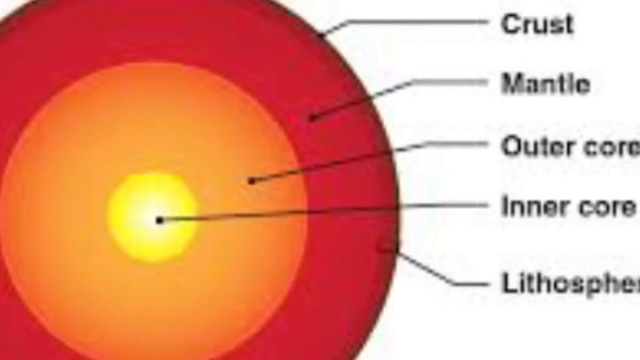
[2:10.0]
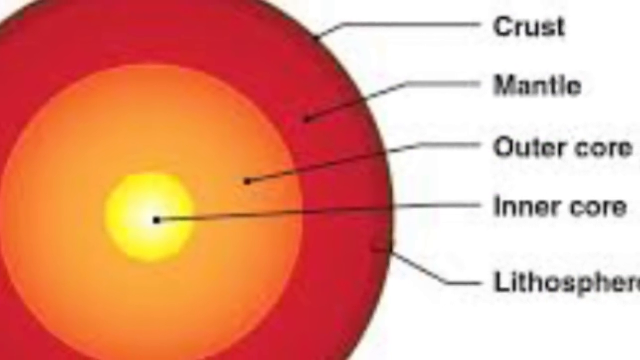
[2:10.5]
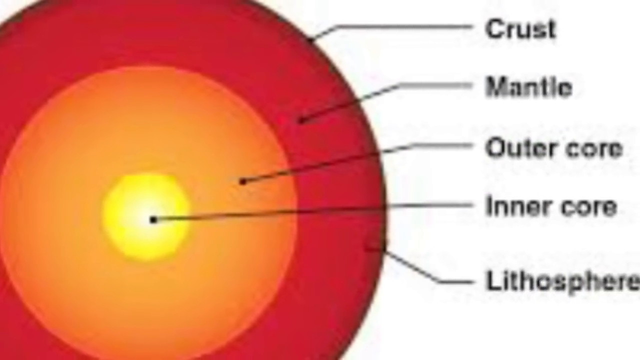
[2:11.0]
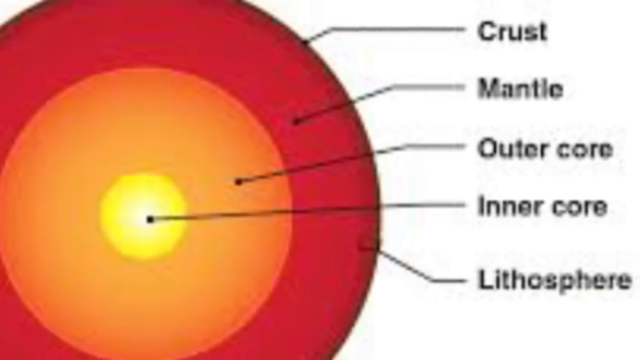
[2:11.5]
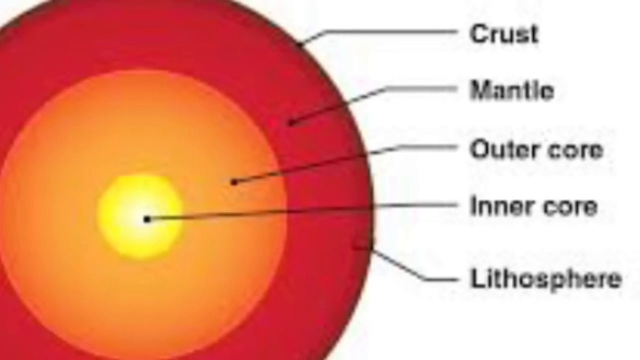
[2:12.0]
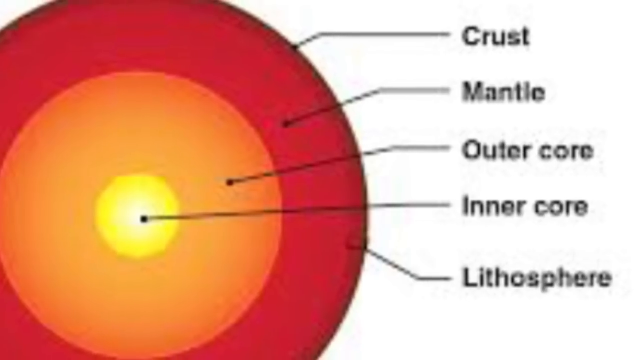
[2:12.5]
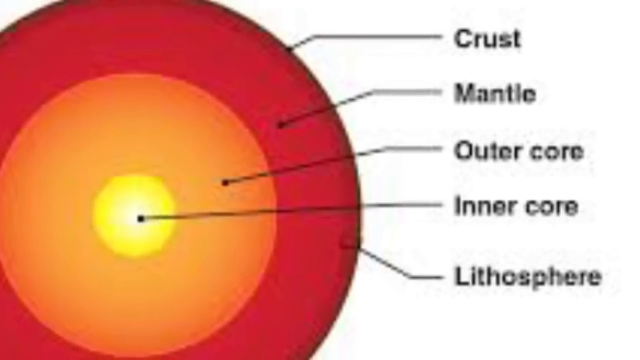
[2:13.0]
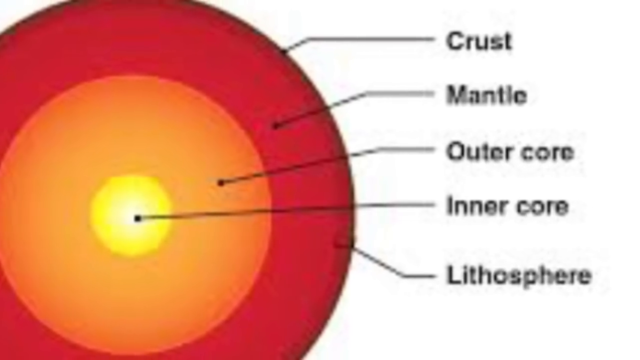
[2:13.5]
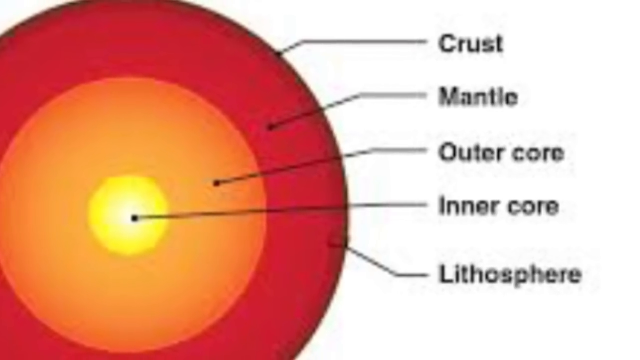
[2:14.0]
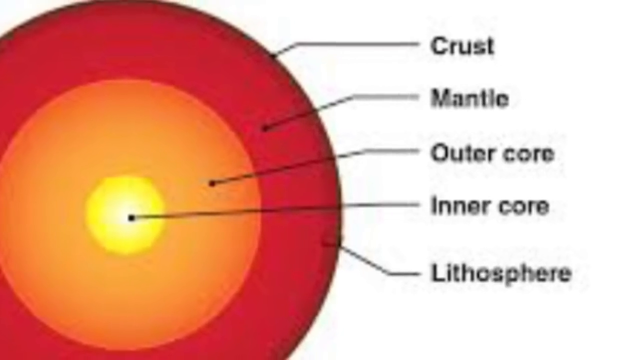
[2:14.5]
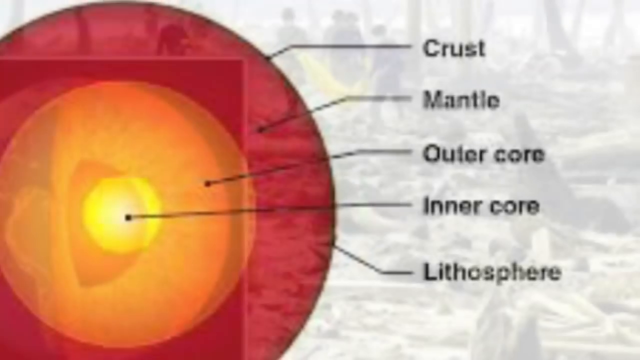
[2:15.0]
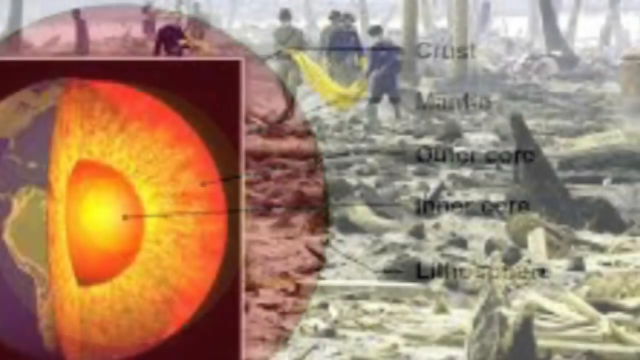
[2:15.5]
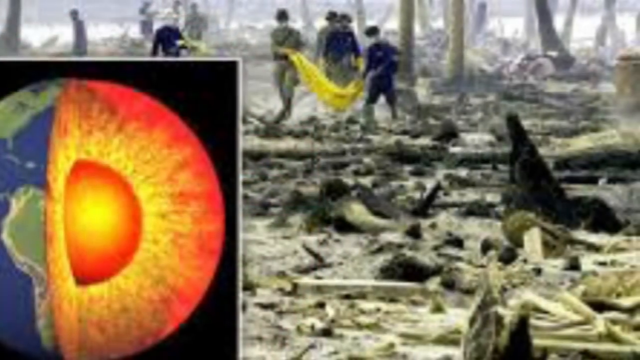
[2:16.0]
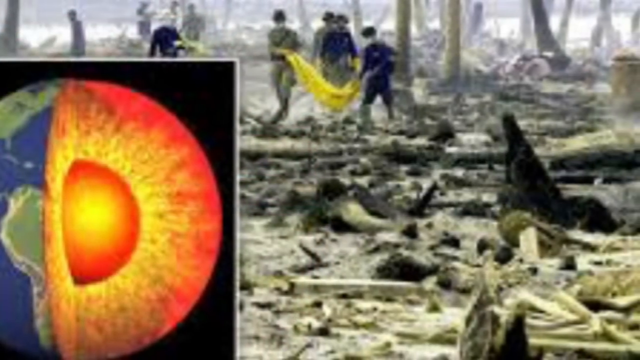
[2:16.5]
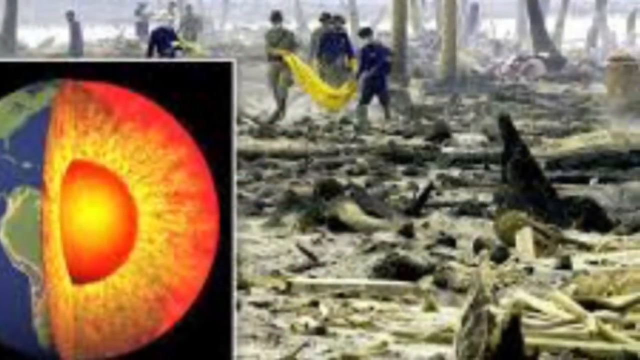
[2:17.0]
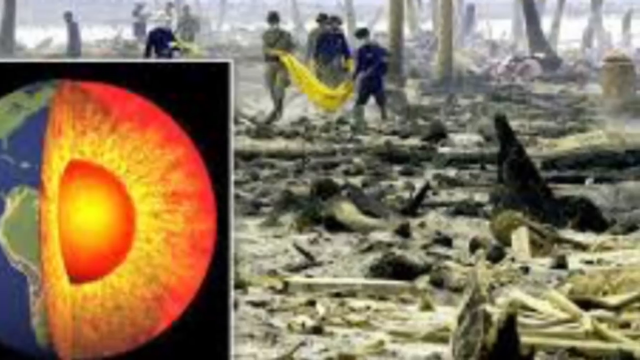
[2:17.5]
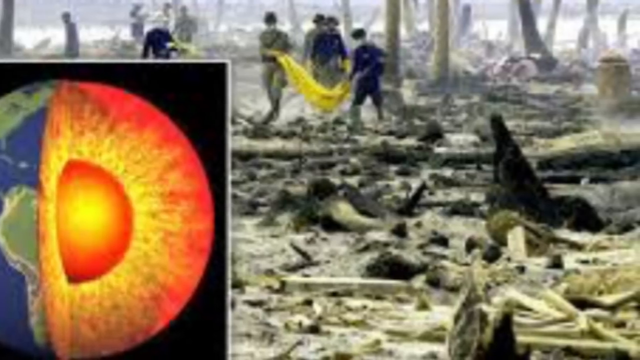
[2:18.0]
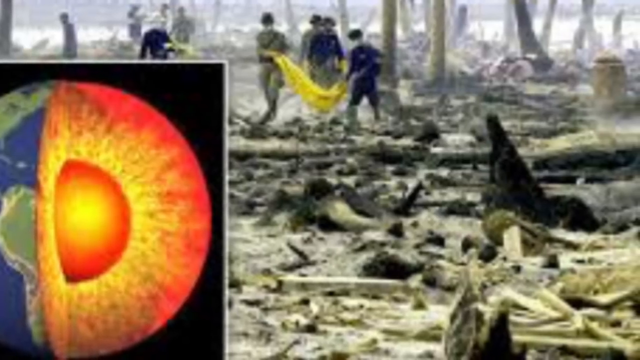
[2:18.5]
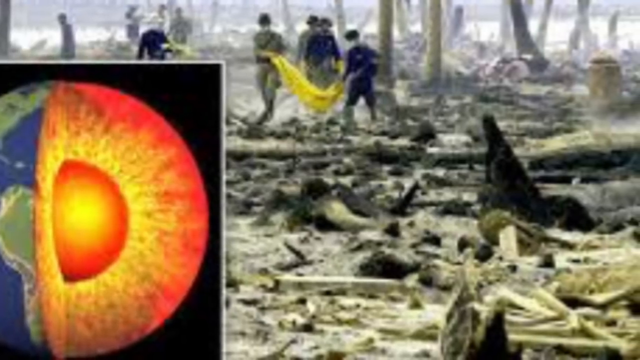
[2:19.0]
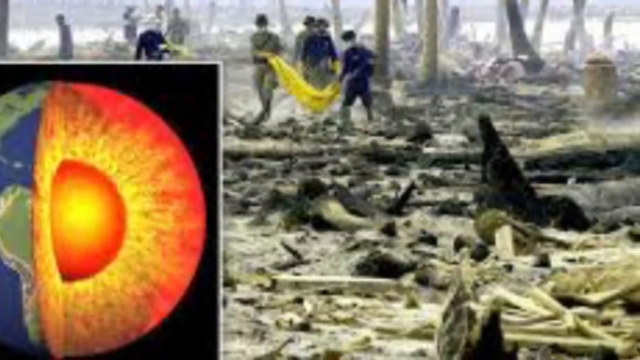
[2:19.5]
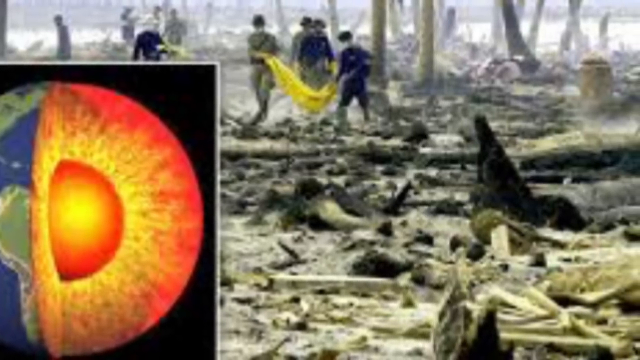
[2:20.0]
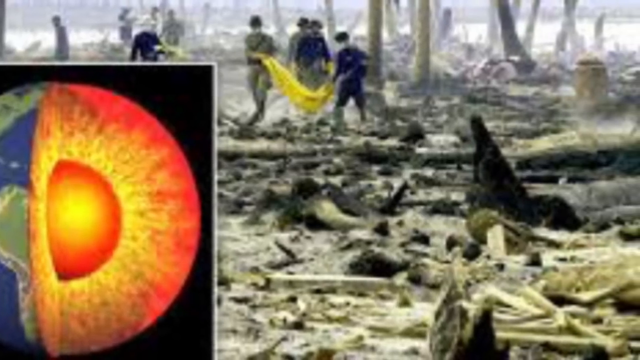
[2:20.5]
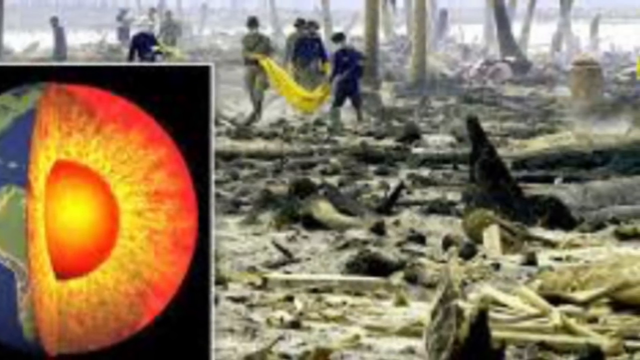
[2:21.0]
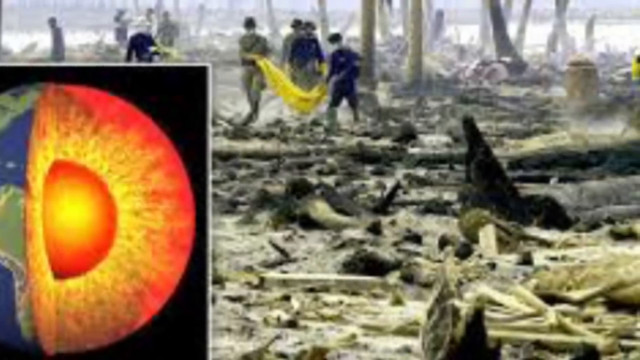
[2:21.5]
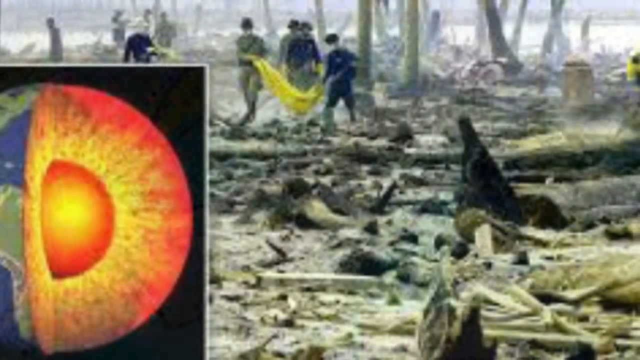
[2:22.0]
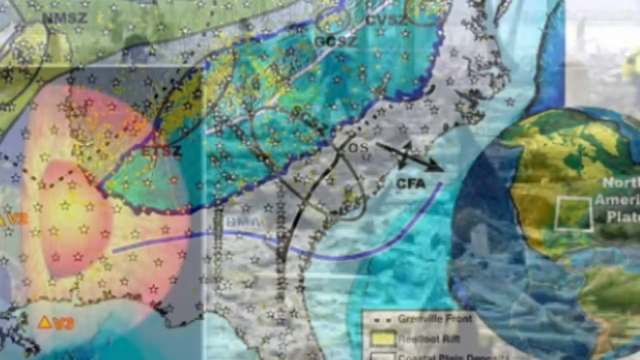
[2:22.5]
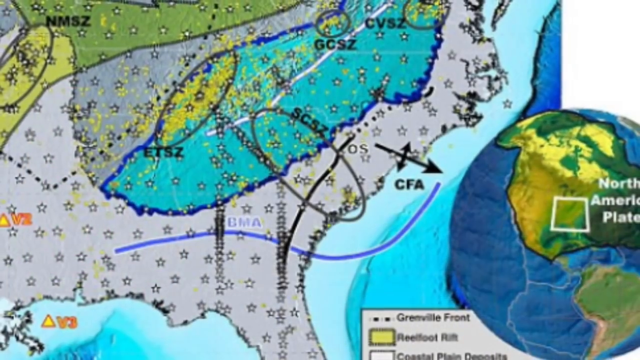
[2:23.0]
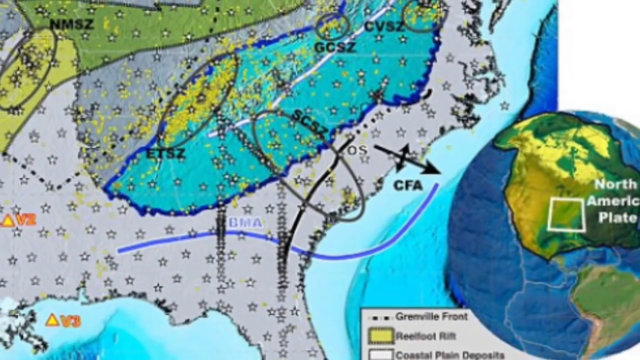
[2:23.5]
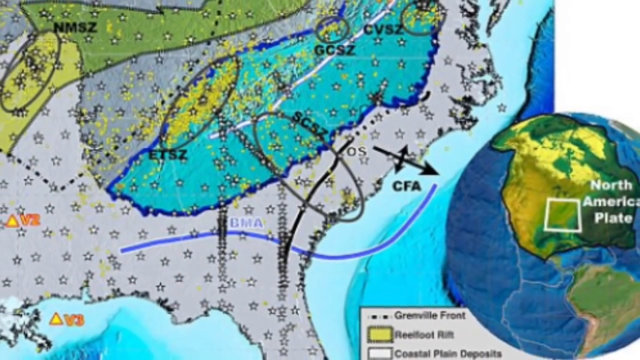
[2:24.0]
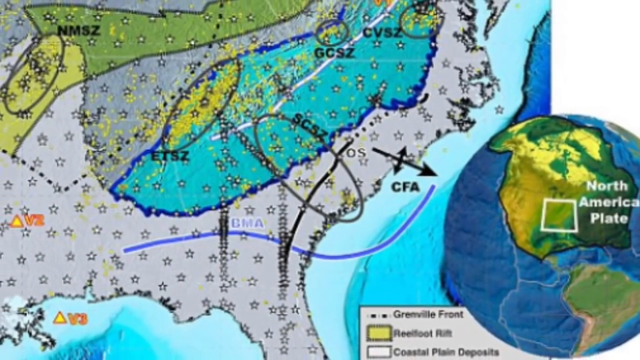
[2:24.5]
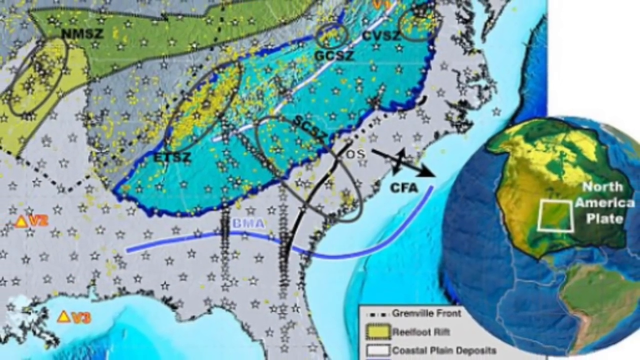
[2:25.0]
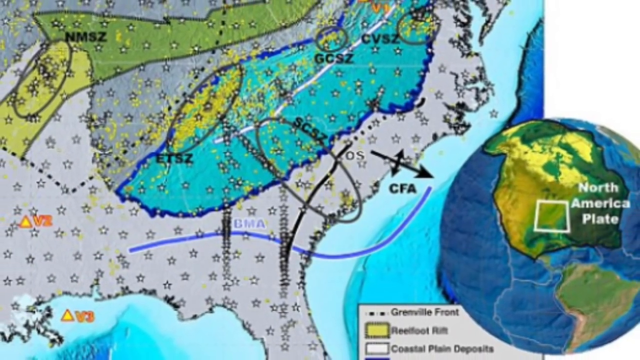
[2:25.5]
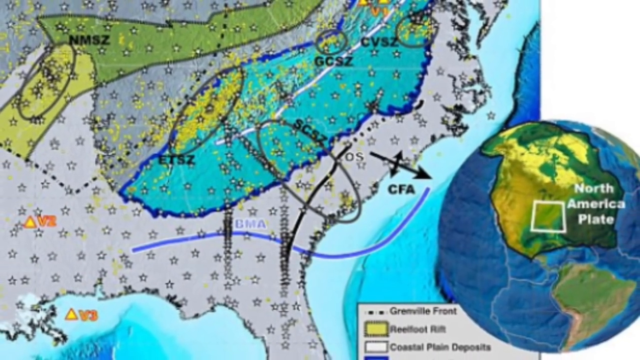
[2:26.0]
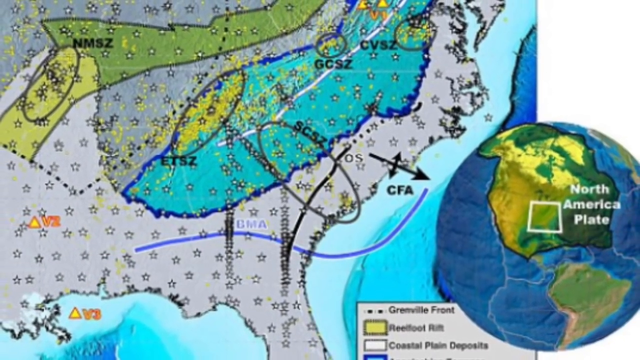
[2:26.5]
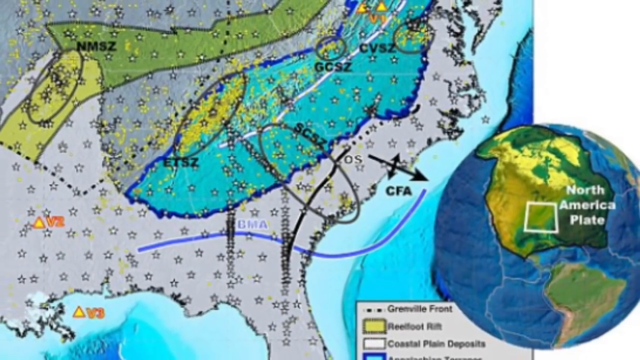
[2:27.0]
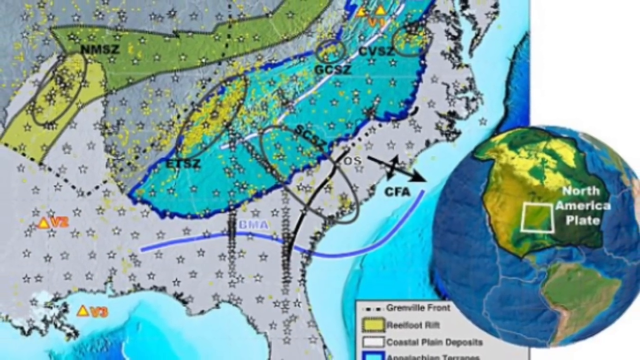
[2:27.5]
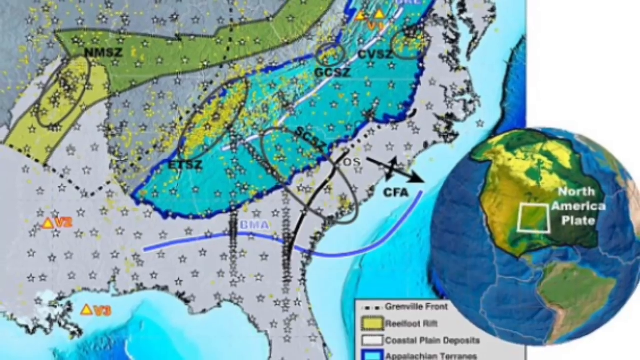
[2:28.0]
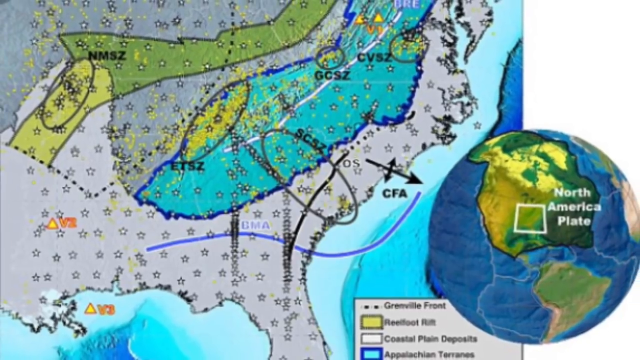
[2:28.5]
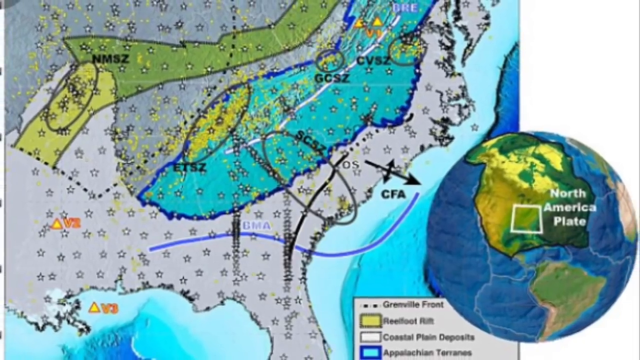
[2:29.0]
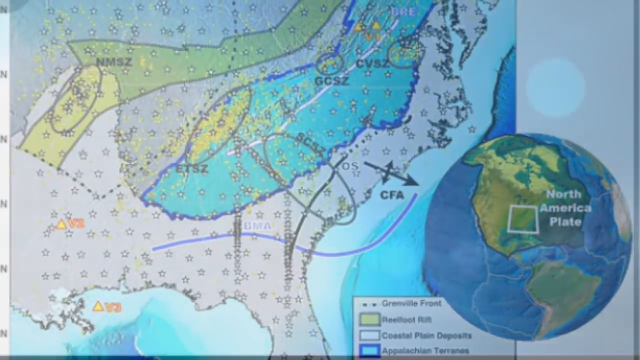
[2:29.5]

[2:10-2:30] A large circle appears with an inner circle, another inner circle and another inner circle inside it. The outer circle is outlined in black and labeled the crest; inside is a red layer labeled the mantle, then an orange circle labeled the outer core, and at the center something colored like the sun, labeled the inner core. Right at the edges is a label for the lithosphere. The view zooms out. Next, a little box shows the outside of the Earth with the mantle and core visible, with a chunk taken out like a piece of pie, going from red to orange to yellow. The picture then shows about 12 people in what looks like ashes, carrying things and wearing masks, with what looks like a giant fire.